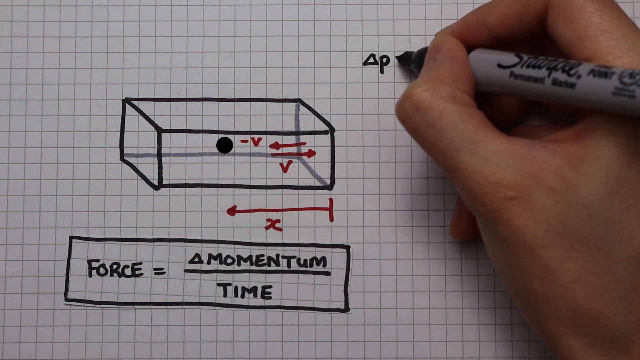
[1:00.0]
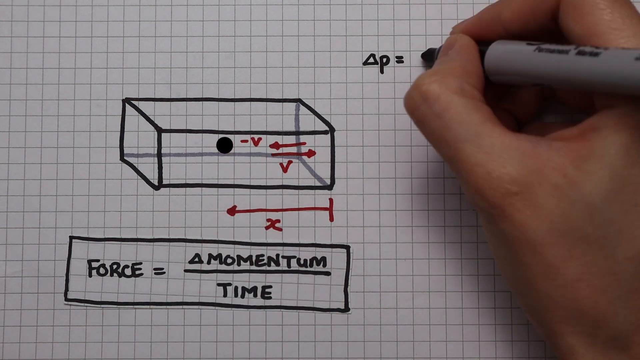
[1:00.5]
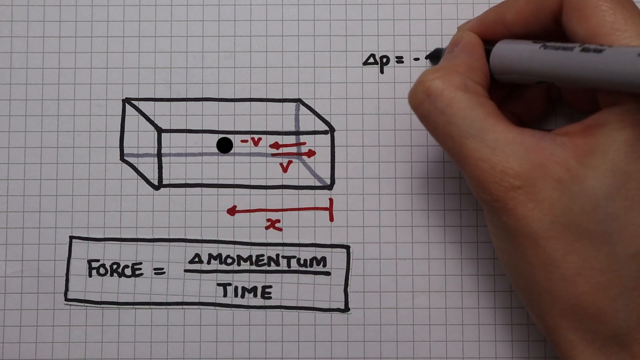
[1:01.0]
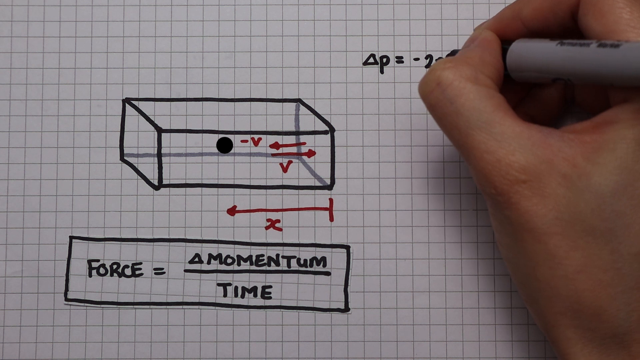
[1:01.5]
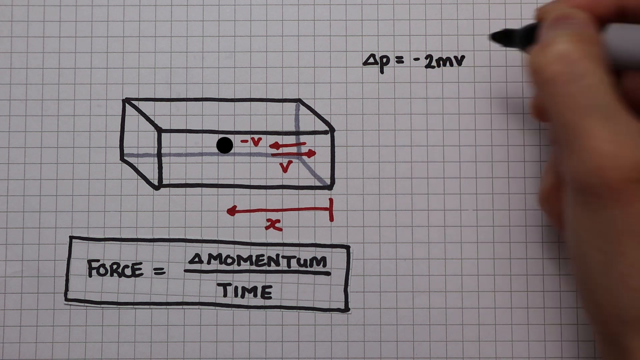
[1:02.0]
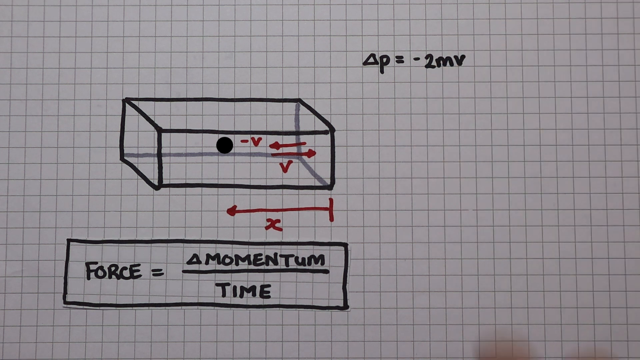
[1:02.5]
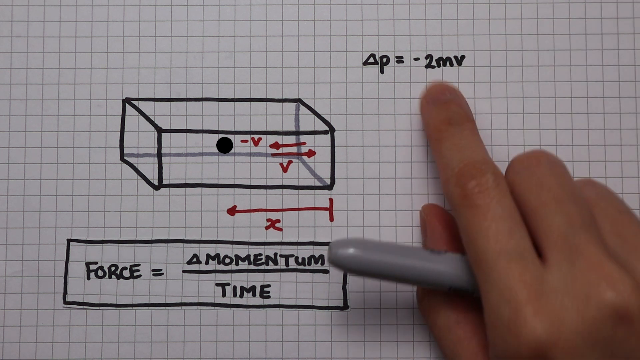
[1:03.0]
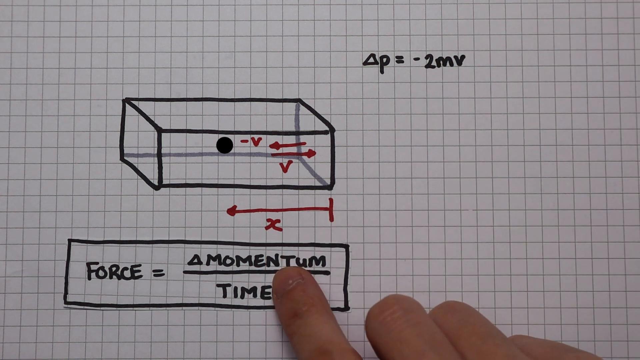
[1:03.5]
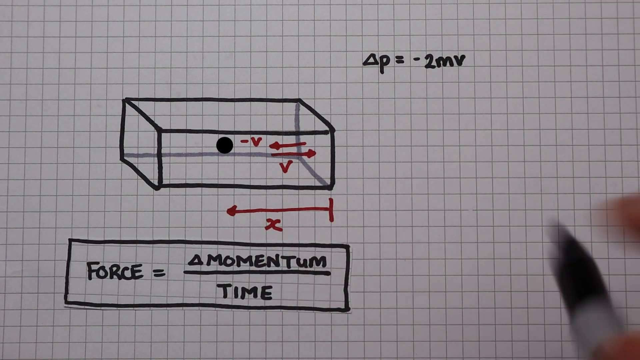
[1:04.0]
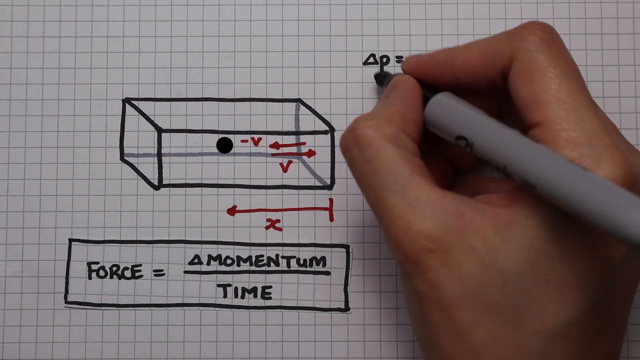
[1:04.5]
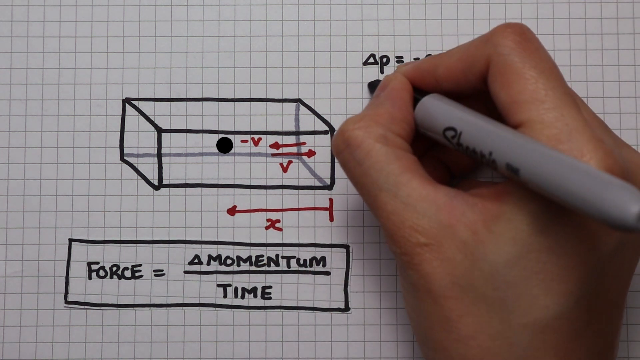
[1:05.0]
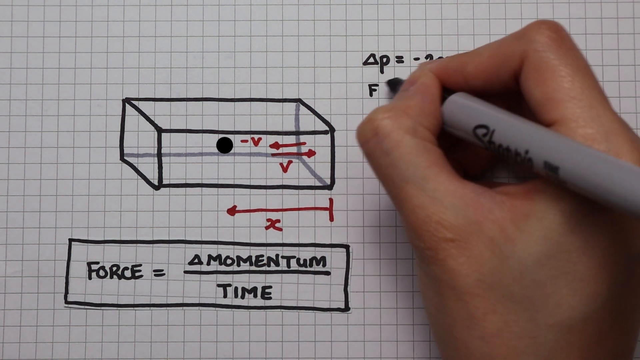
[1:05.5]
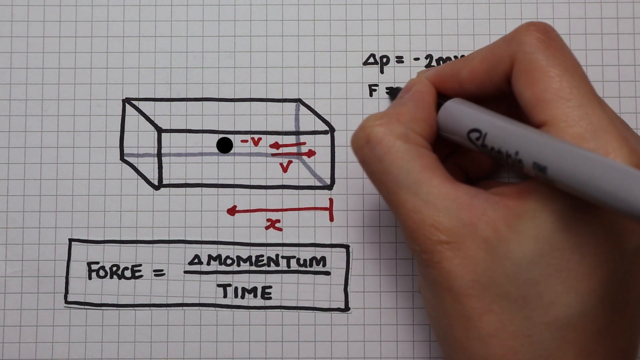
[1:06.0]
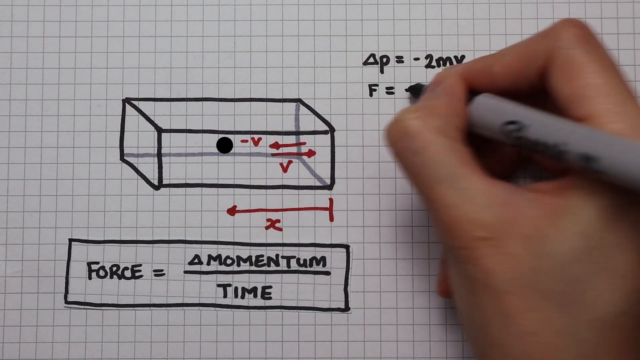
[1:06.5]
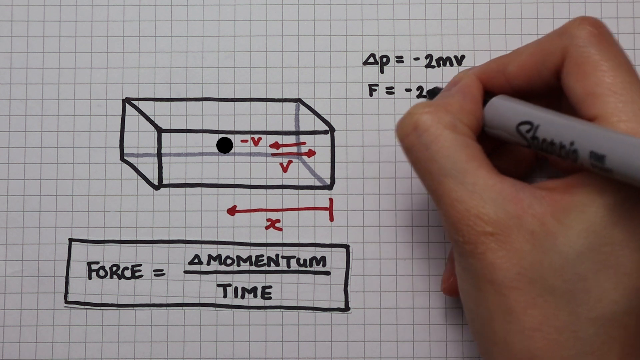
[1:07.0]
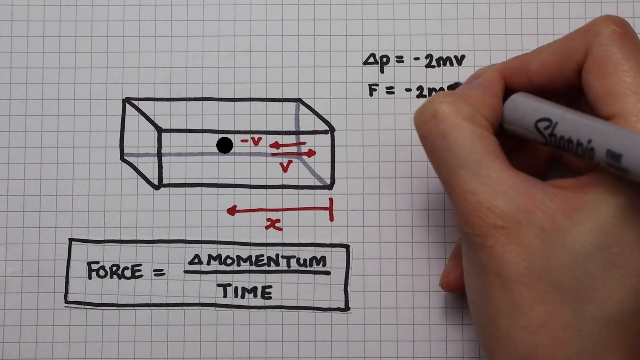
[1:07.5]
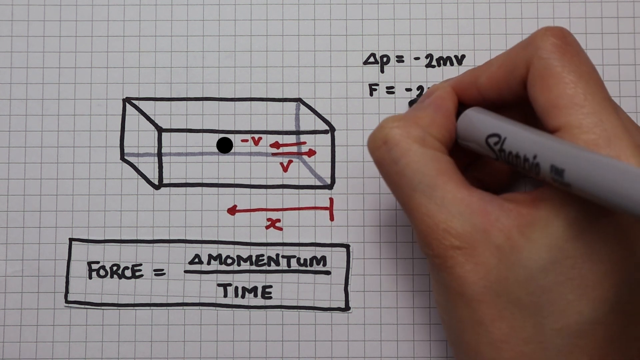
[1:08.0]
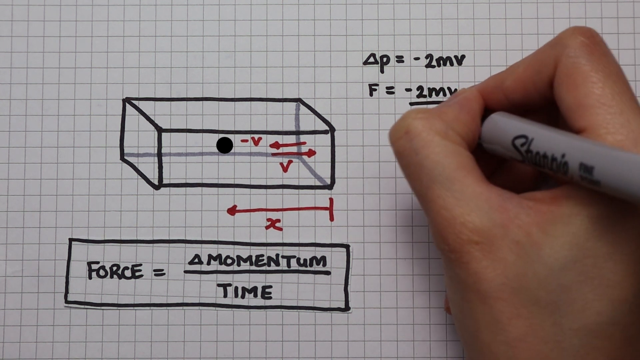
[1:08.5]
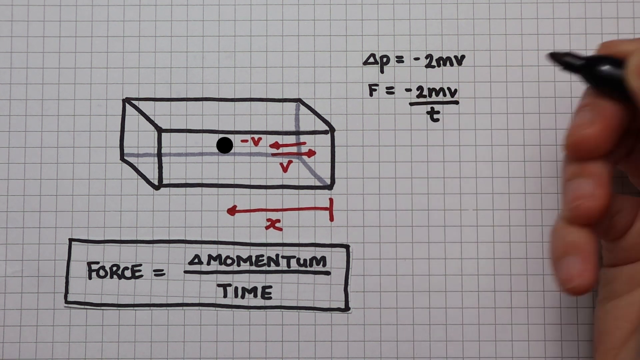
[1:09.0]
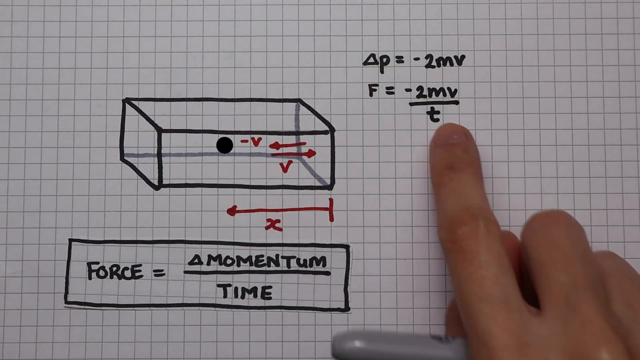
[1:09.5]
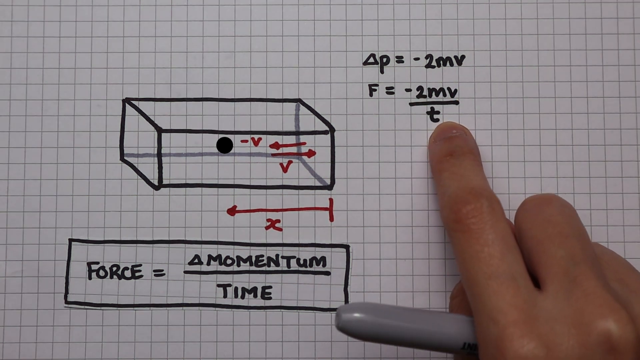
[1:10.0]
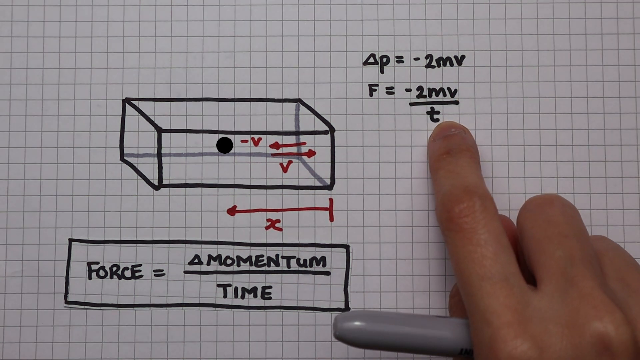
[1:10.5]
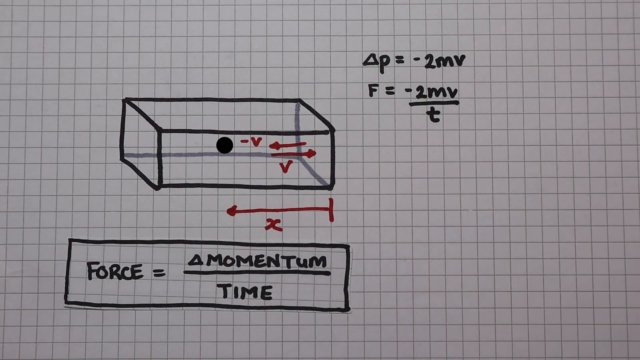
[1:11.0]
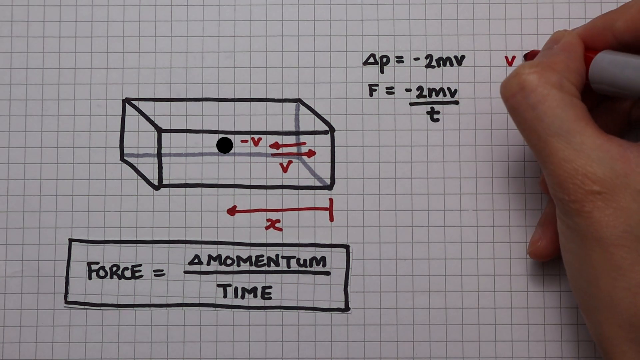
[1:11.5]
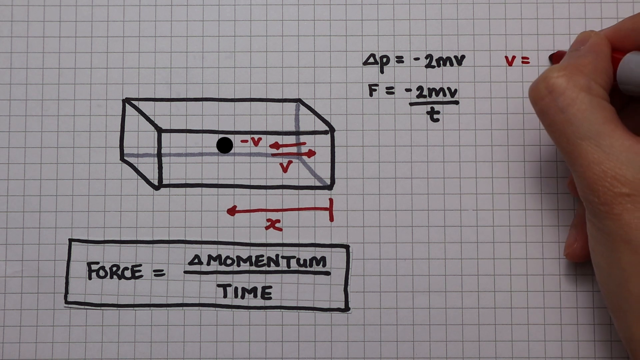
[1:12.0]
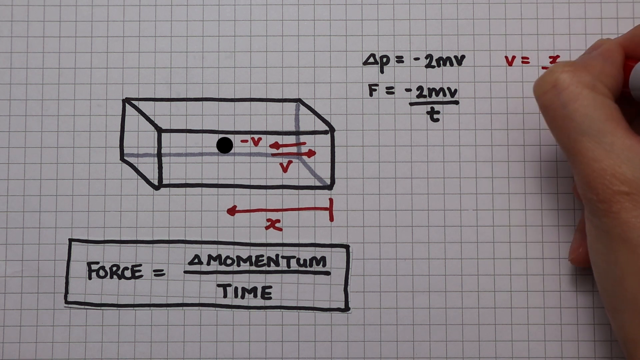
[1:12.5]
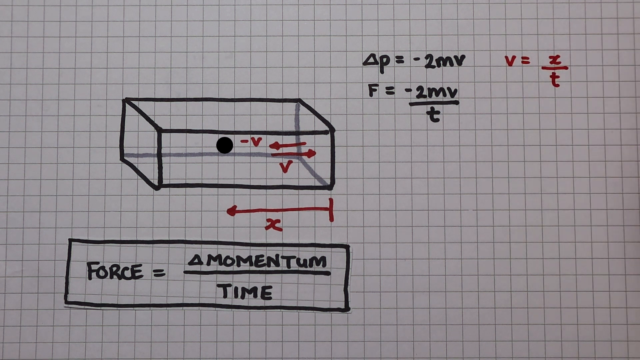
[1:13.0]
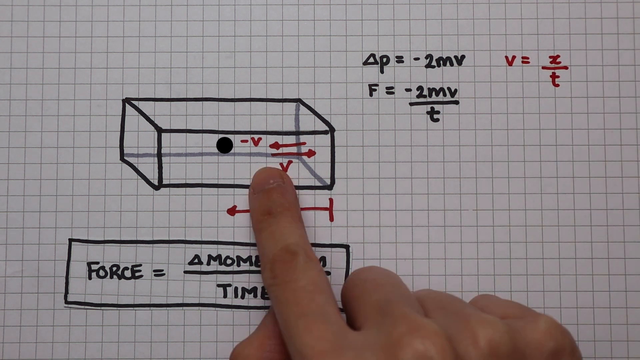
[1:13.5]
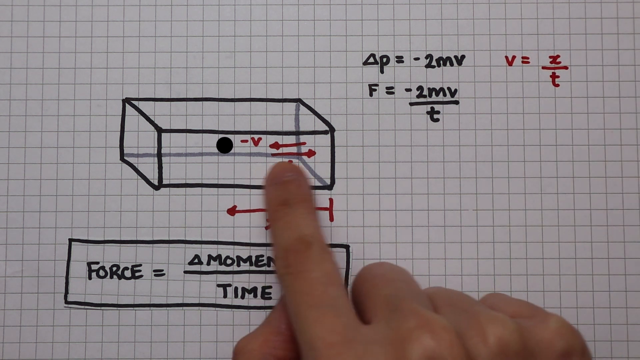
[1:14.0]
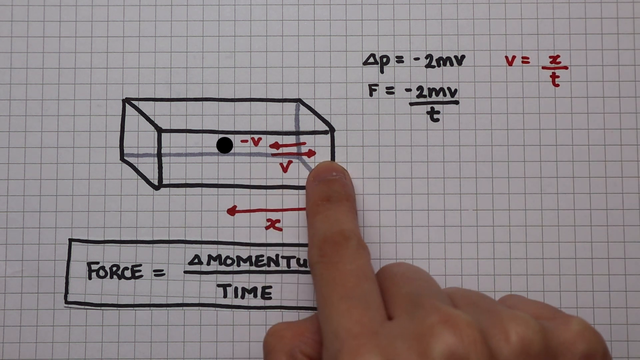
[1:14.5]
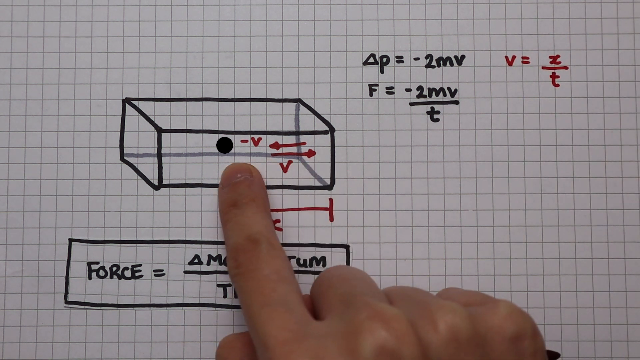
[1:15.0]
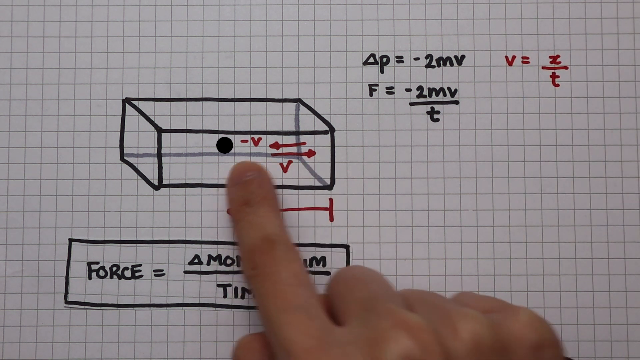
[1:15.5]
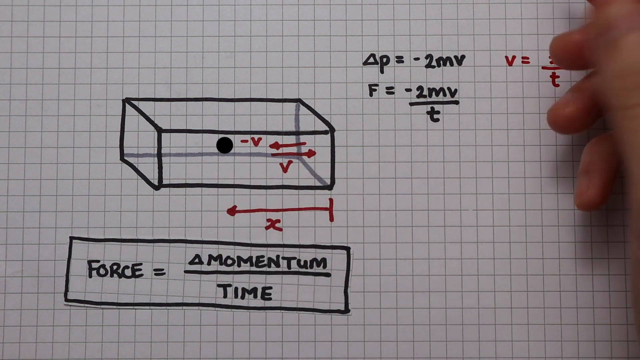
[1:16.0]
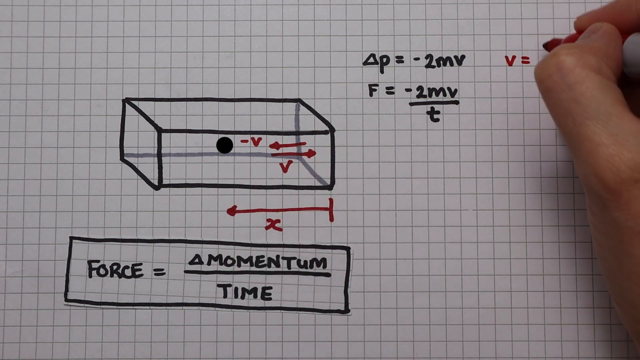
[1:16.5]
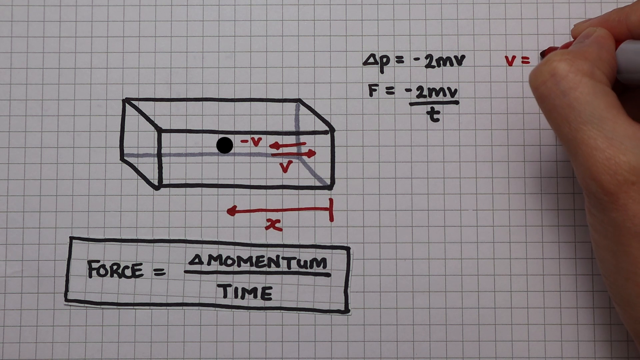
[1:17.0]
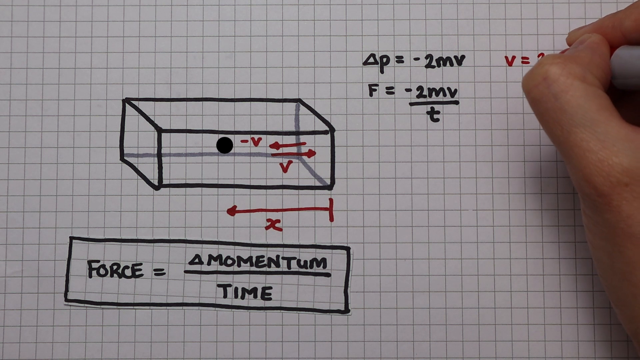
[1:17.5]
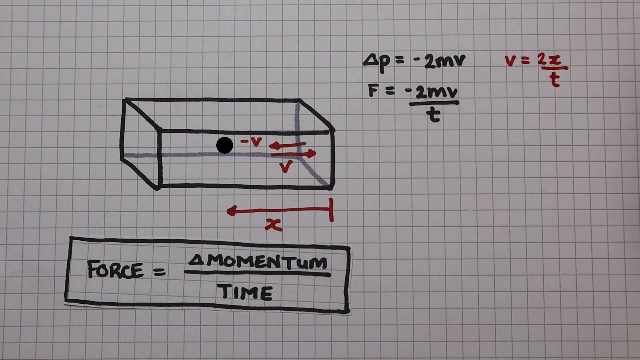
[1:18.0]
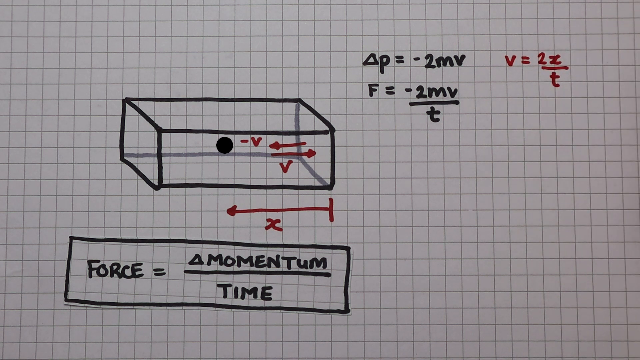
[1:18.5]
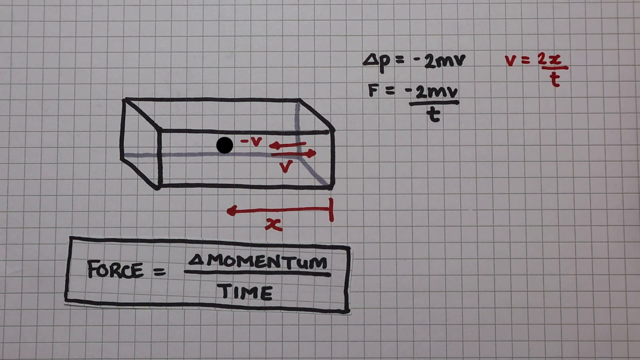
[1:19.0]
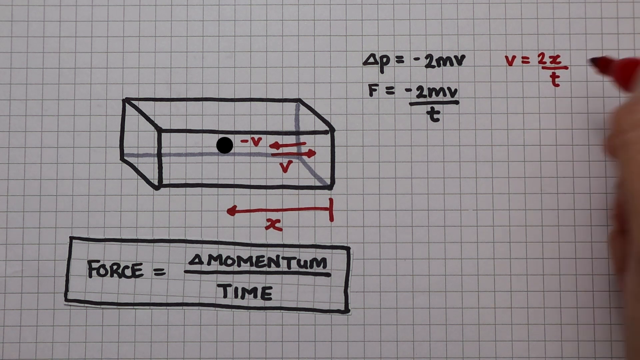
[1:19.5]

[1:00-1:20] A hand on the right side of the page uses a black marker, a Sharpie, with the name on its side. The marker is gray from an inch from the bottom, angled slightly down toward the right, held between the person's right thumb and right index finger and resting on the hand. Starting in the middle of the page and moving toward the right, the hand writes a triangle followed by "P = 2MV". Underneath, in small letters, it writes "F = -2MV" over a T. The right forefinger points at this equation. The hand comes back holding a red marker and points at the 3D box, at the two drawn arrows and the black round ball. It then moves to the right side and writes "V = 2X" over something.